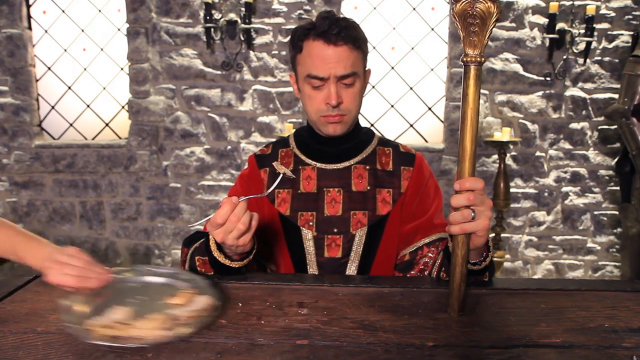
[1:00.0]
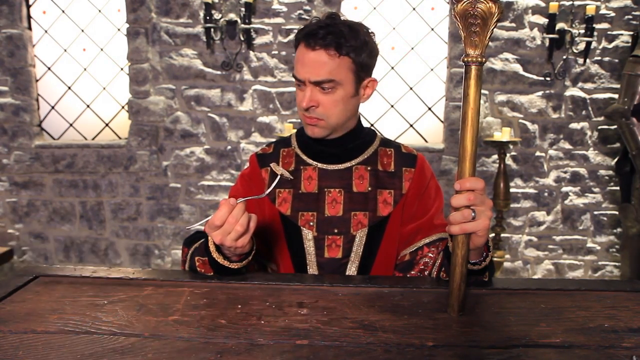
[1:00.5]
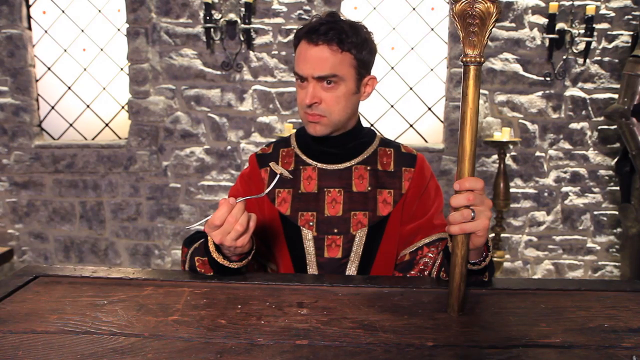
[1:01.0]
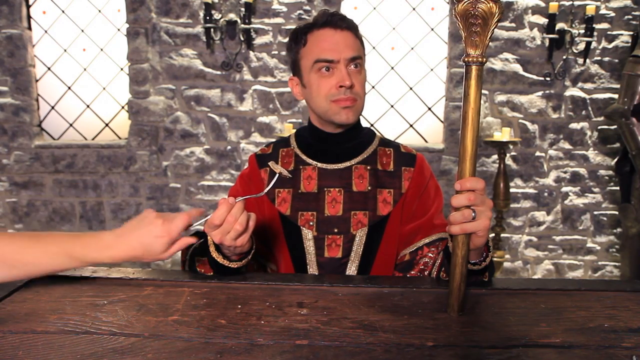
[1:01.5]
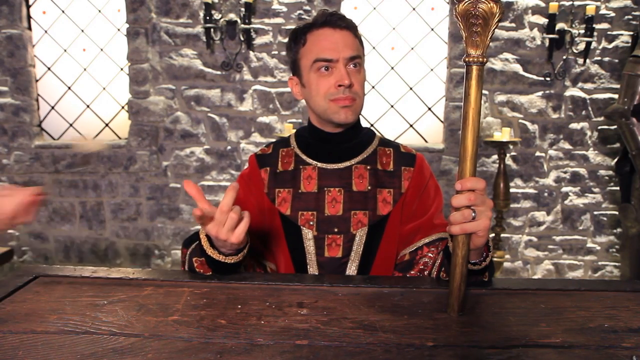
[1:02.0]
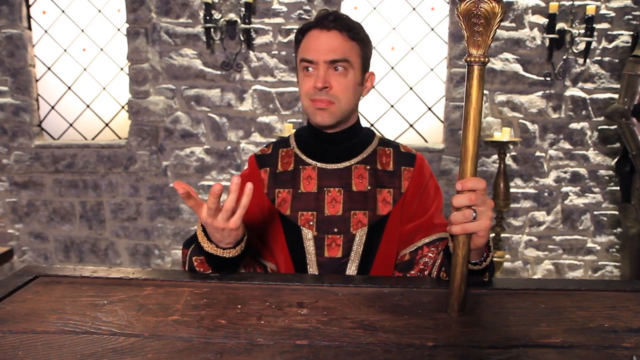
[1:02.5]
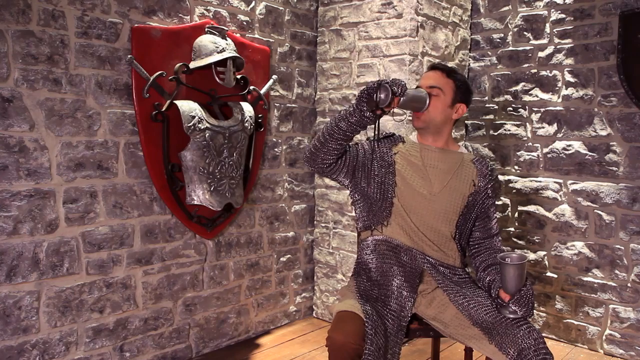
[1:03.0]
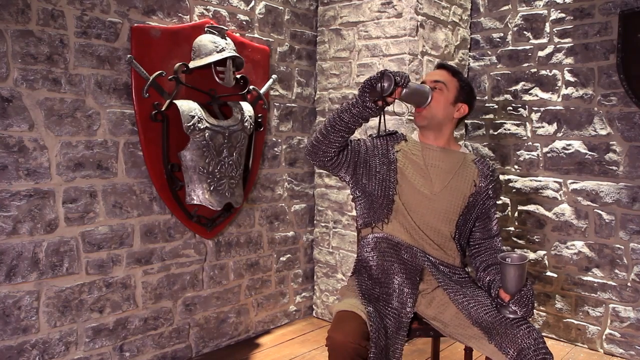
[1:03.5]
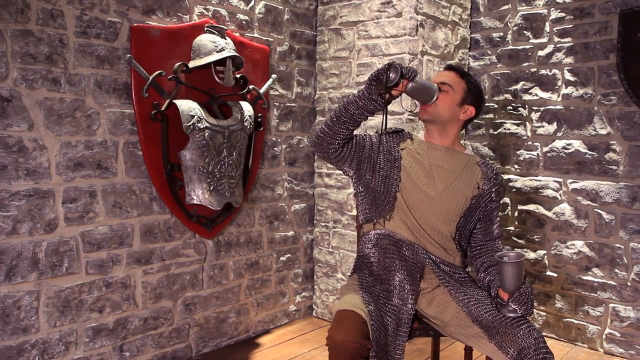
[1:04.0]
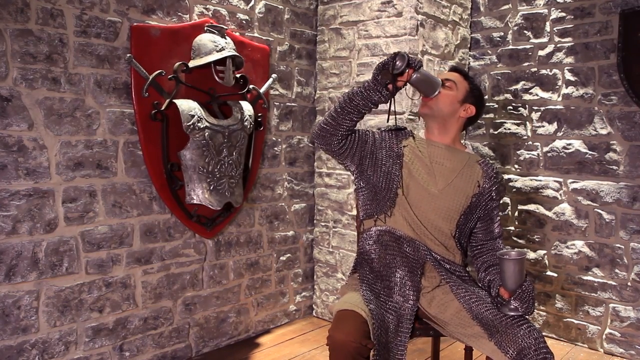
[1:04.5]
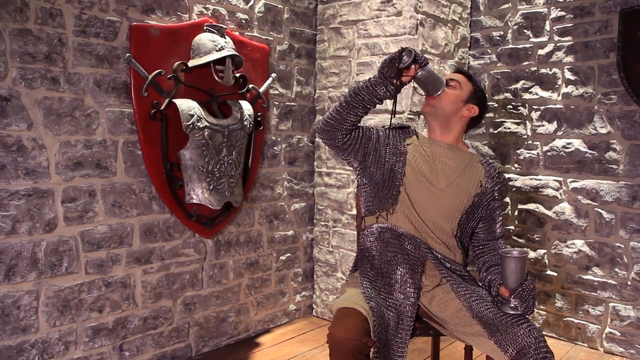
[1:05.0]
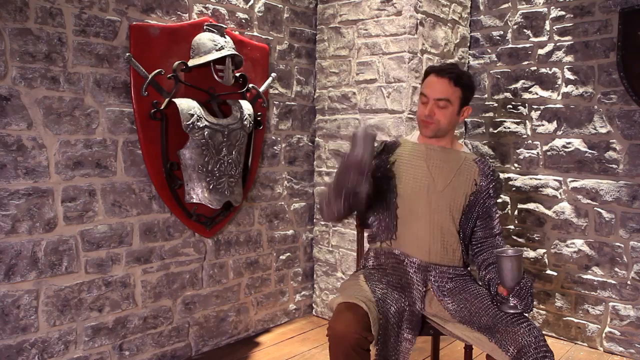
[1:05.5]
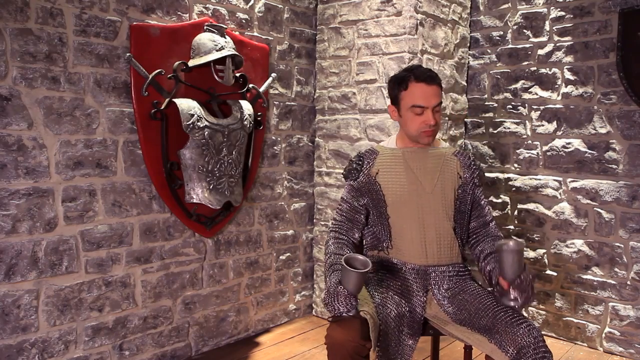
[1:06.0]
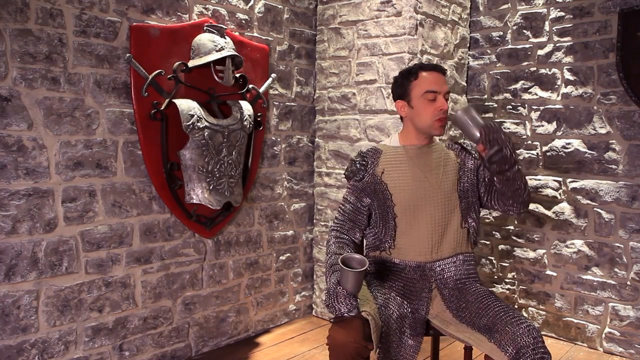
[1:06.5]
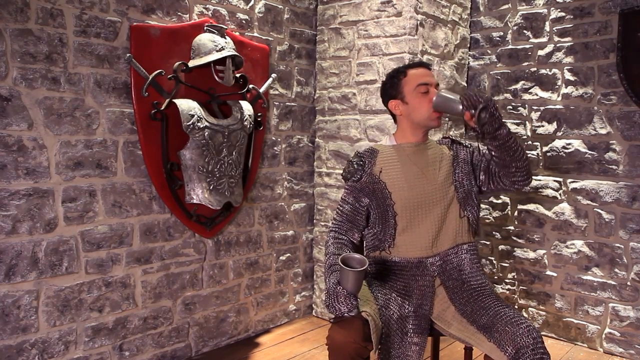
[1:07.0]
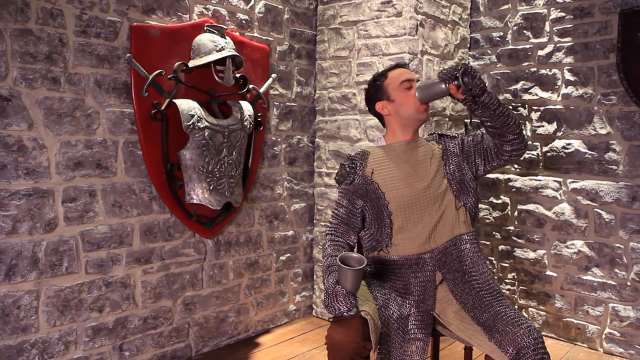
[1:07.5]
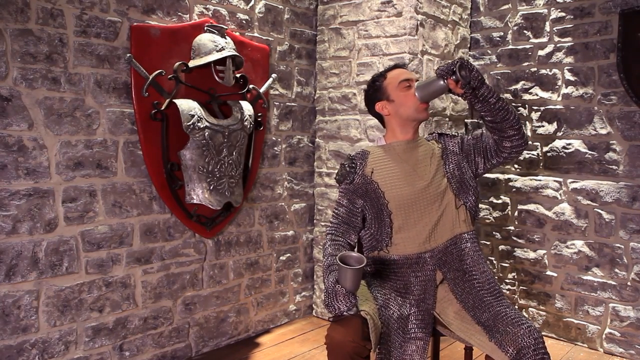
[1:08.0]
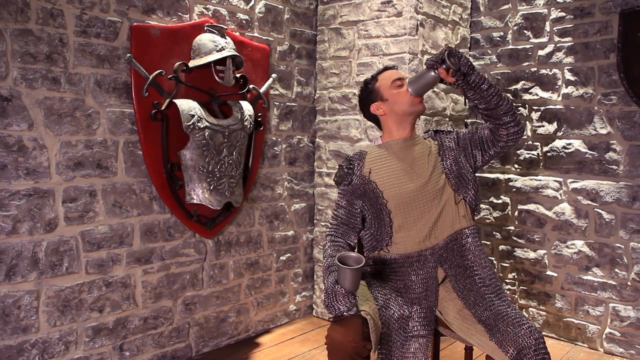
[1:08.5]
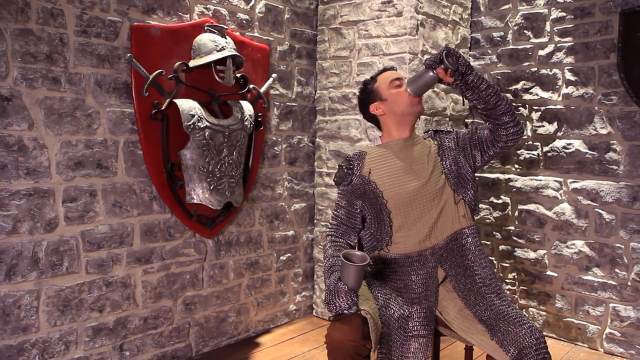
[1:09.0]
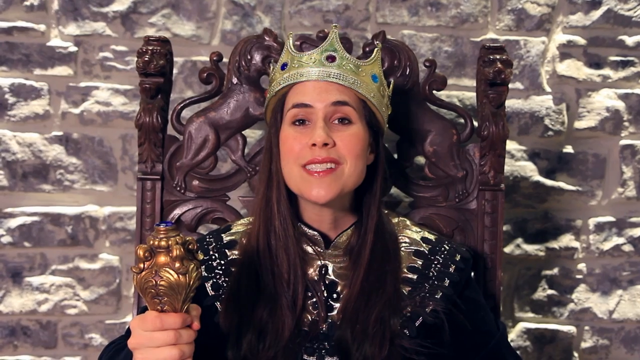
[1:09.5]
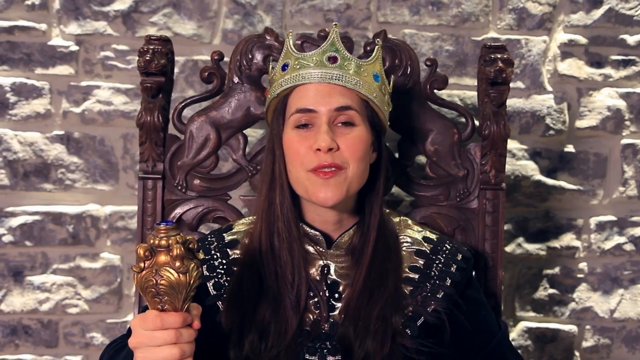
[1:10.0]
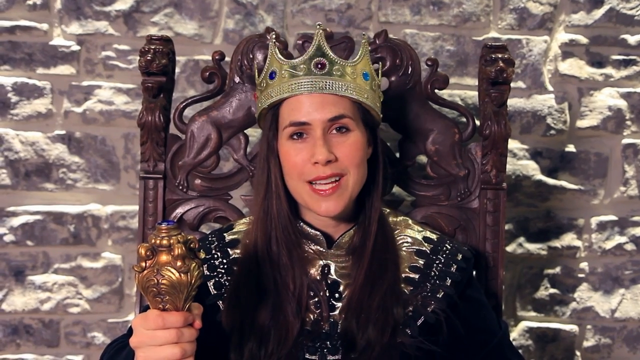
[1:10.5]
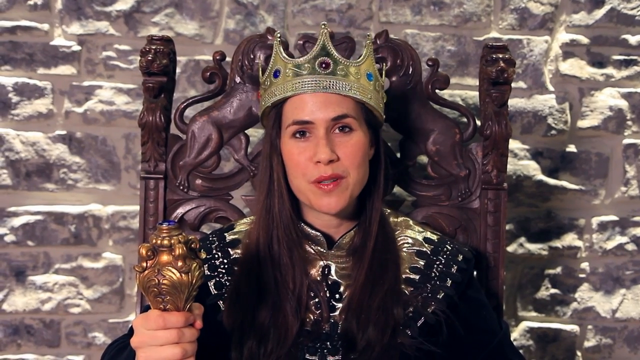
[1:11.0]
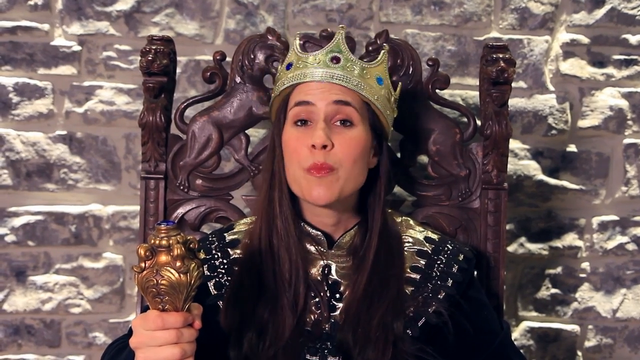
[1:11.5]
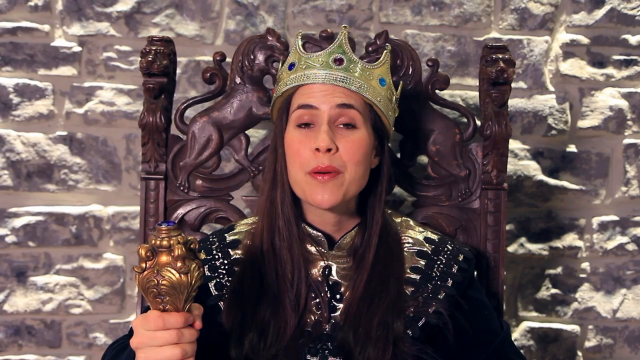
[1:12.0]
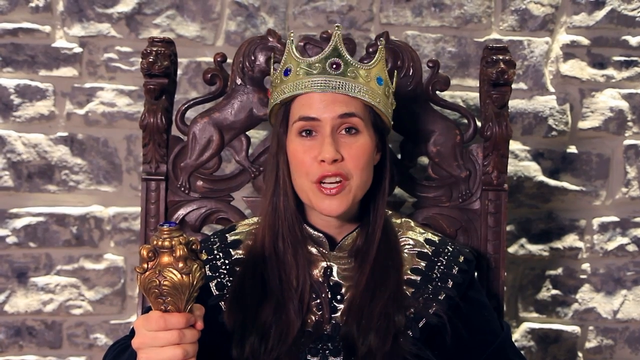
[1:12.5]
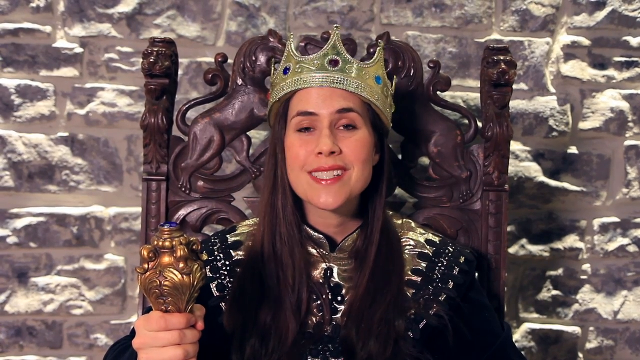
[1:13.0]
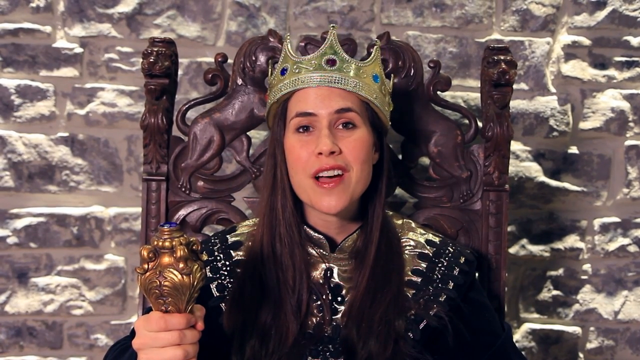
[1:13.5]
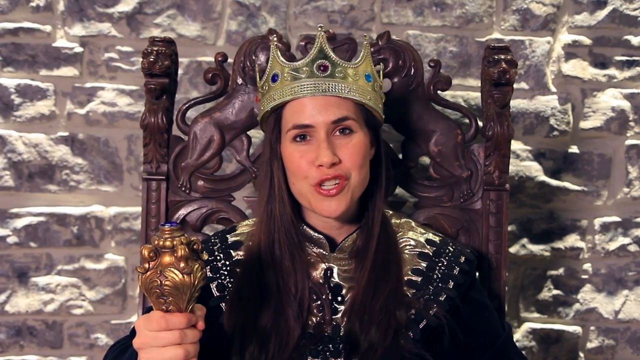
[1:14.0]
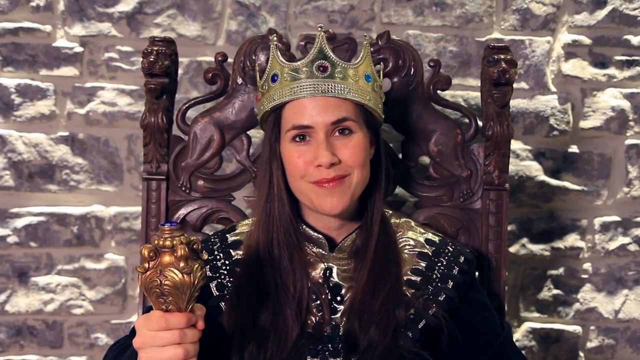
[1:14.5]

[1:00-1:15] After his plate is taken, the man looks very surprised and irritated, and then someone takes his fork with what looks like a piece of chicken on it. He watches, surprised, and makes a "what the heck" hand gesture. The video then cuts to him dressed completely differently, apparently in chain mail, sitting on a chair in a different castle room with armor and a shield on the wall, drinking from goblets held in both hands. Next, the woman in the king attire, seen from the chest up as she sits on the throne, talks to the camera, looking happy, smiling and moving her head. Then she appears in the peasant outfit in what looks like the basement of a castle, with food next to her, including a piece of bread and a goblet, and what maybe looks like salt on the table. She holds some bread in her hand and moves it up and down as she talks to the camera.